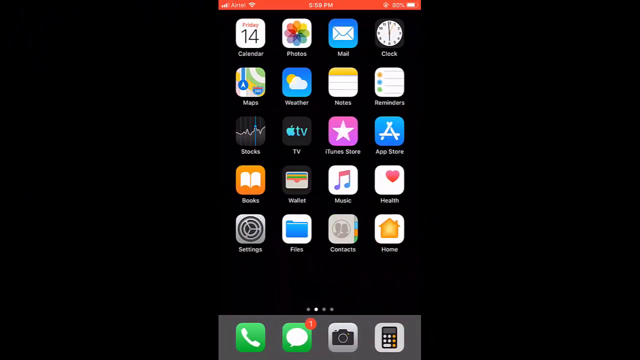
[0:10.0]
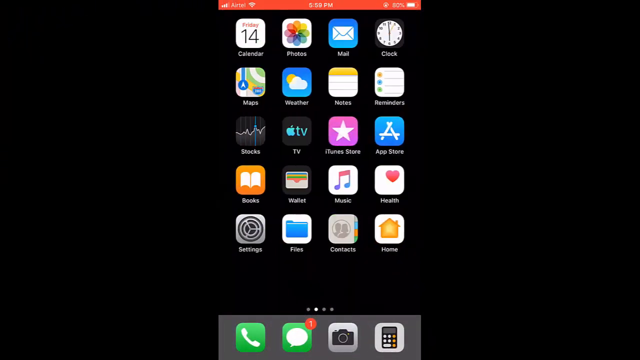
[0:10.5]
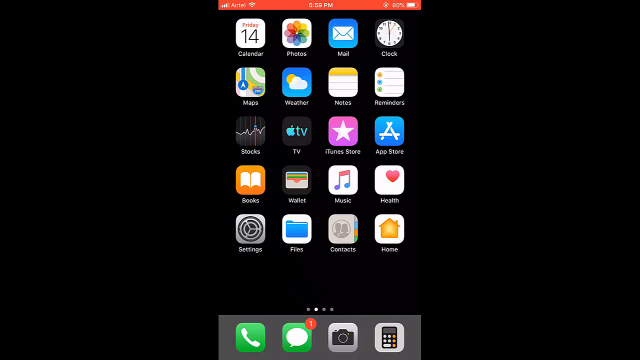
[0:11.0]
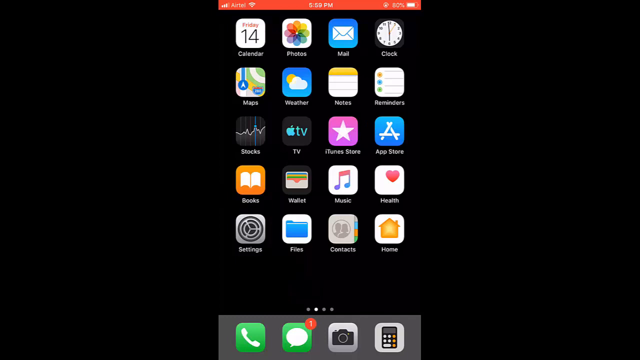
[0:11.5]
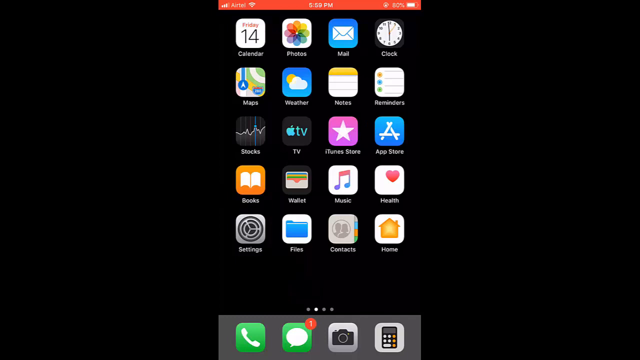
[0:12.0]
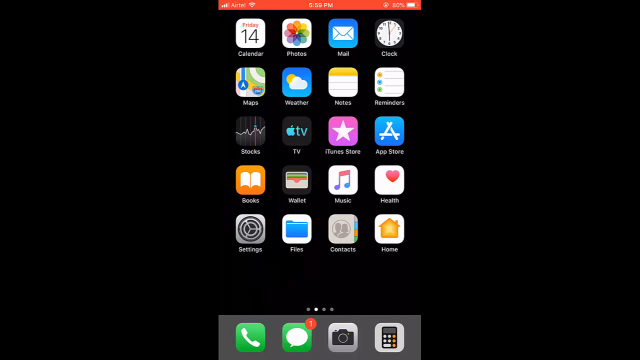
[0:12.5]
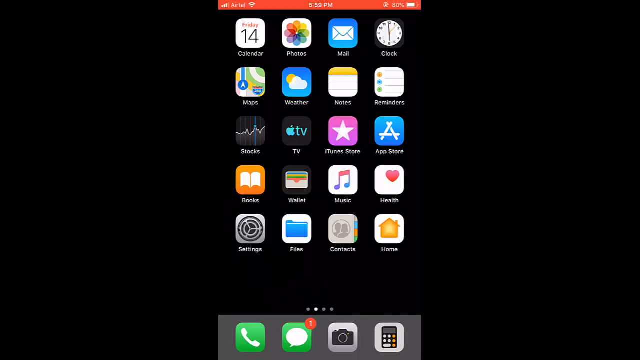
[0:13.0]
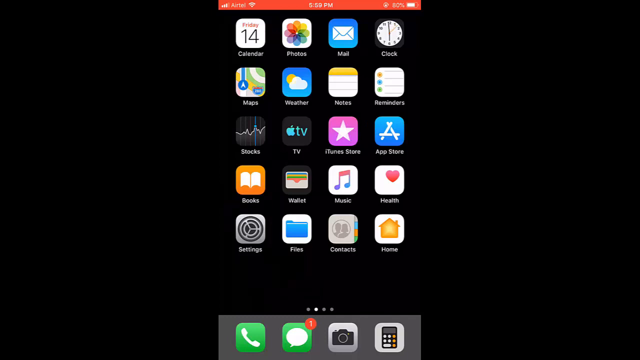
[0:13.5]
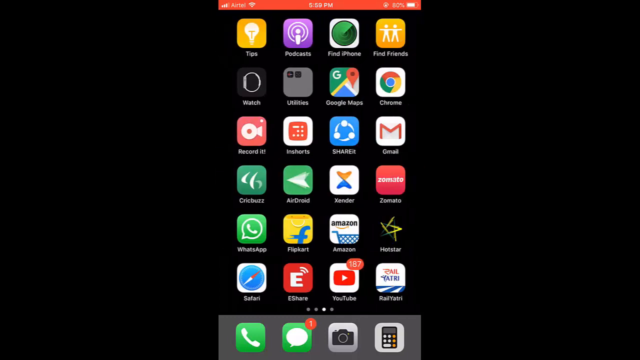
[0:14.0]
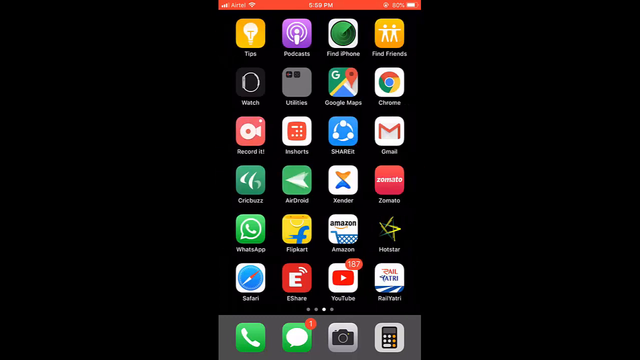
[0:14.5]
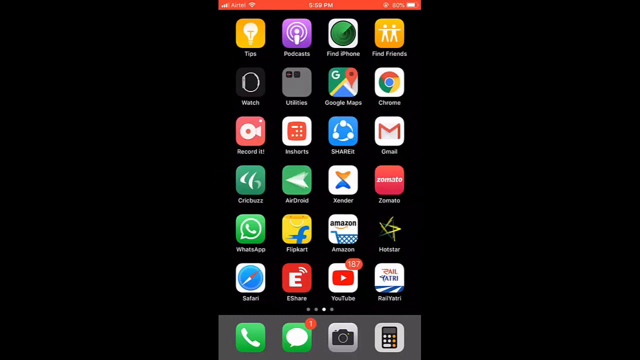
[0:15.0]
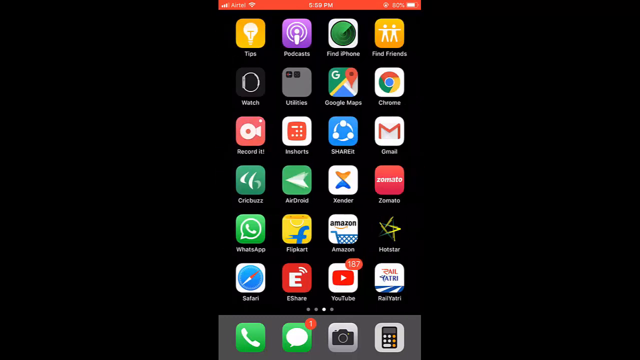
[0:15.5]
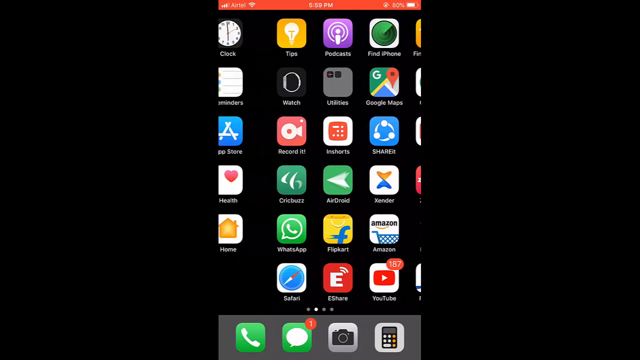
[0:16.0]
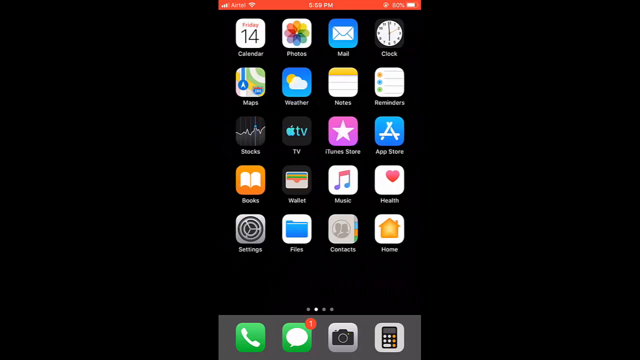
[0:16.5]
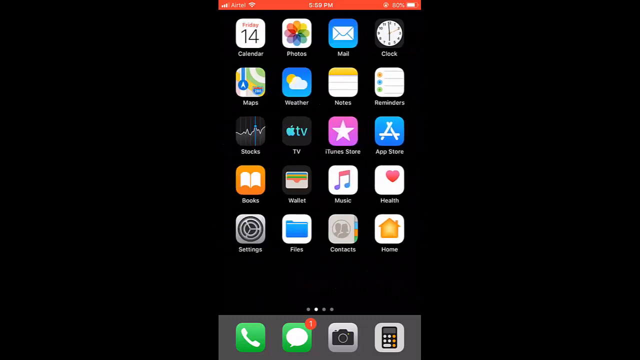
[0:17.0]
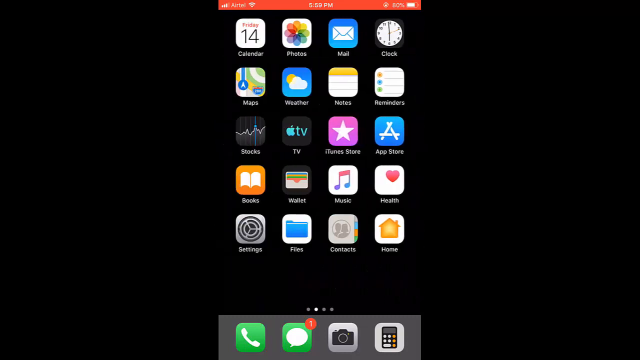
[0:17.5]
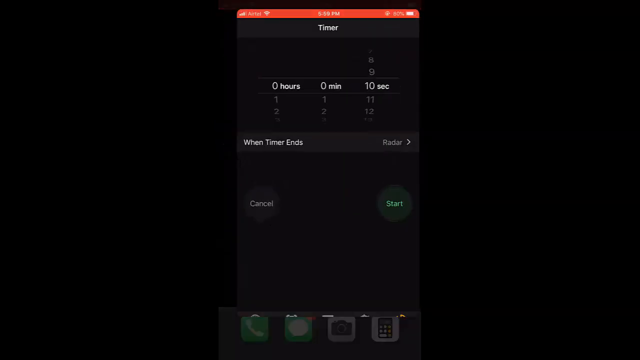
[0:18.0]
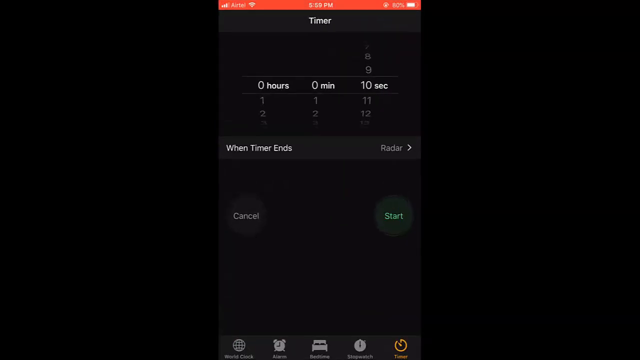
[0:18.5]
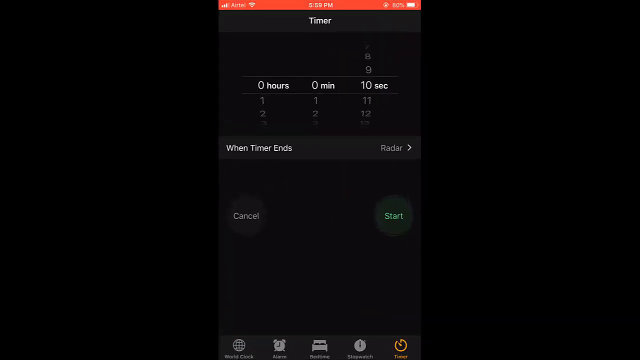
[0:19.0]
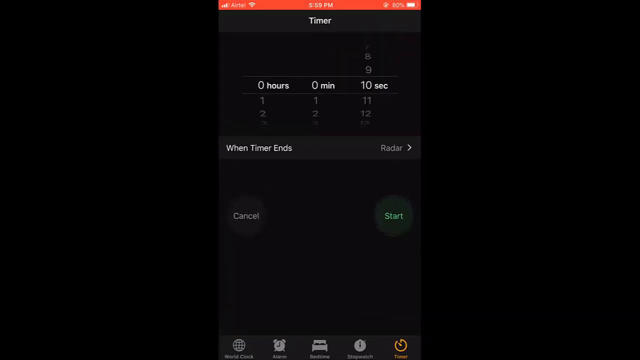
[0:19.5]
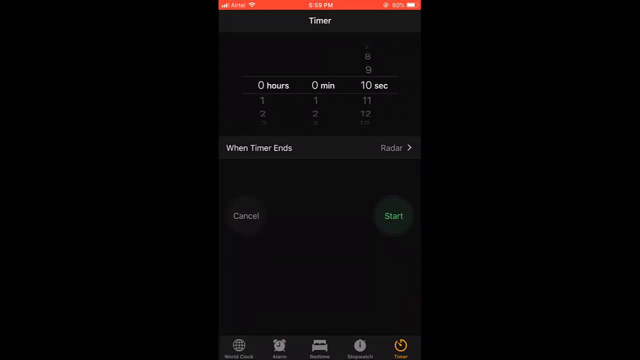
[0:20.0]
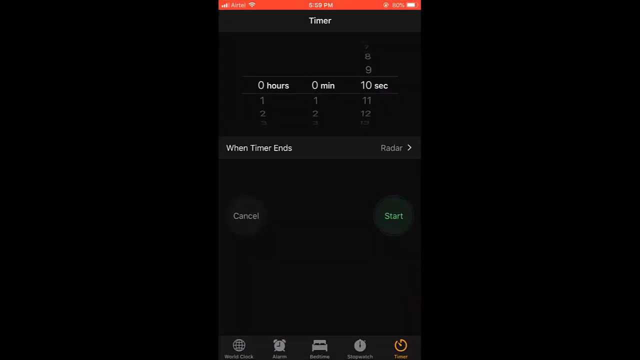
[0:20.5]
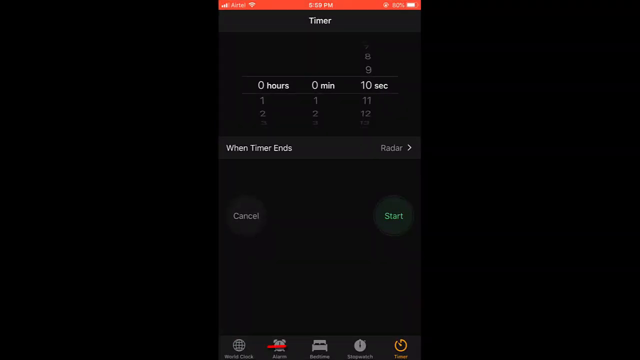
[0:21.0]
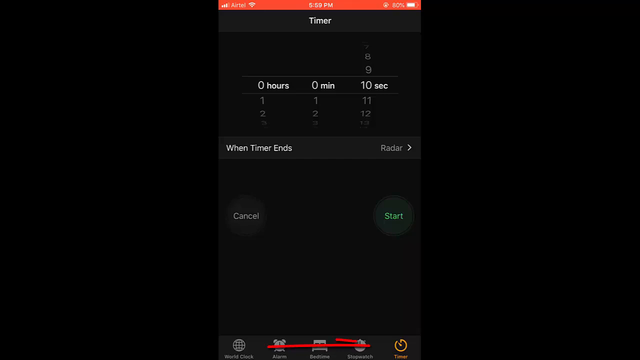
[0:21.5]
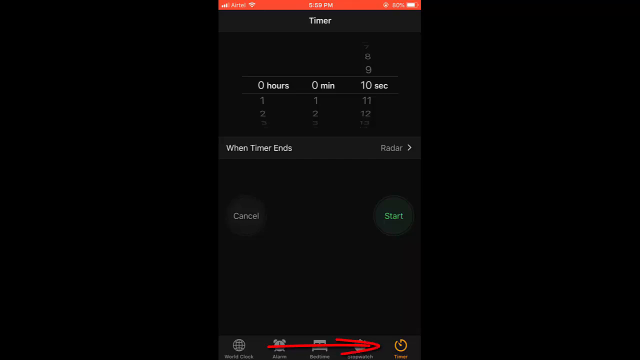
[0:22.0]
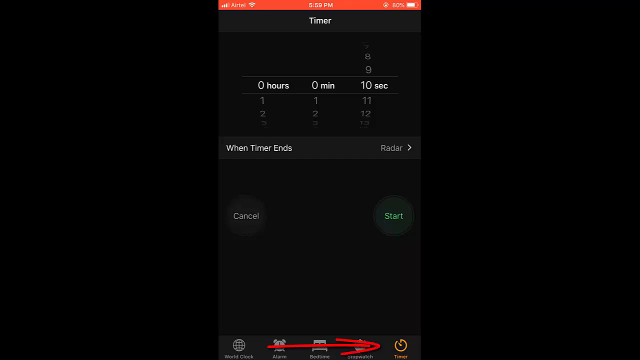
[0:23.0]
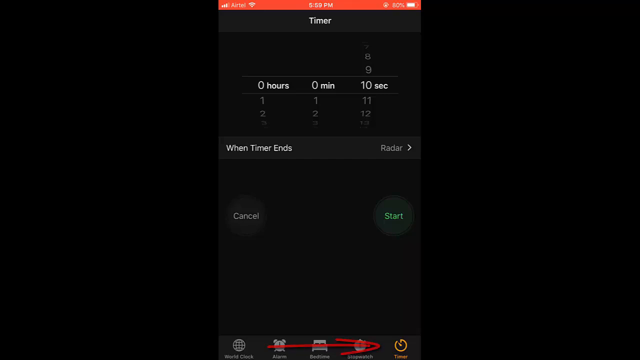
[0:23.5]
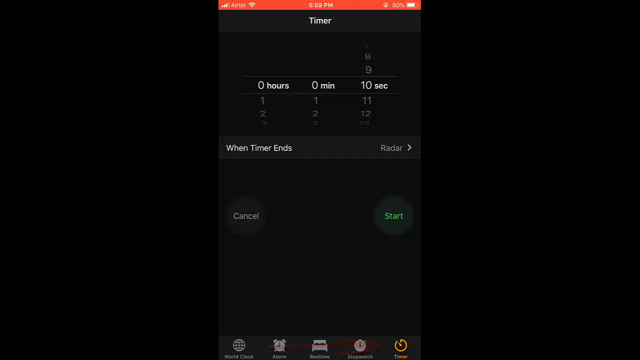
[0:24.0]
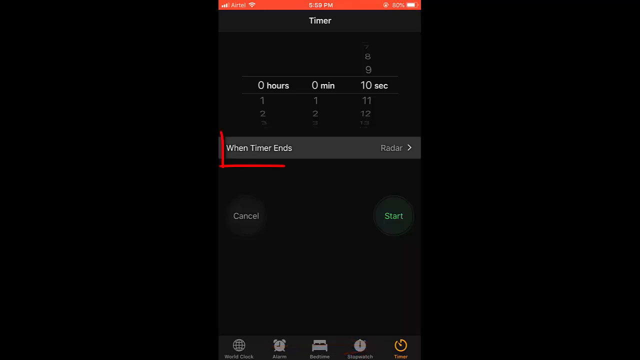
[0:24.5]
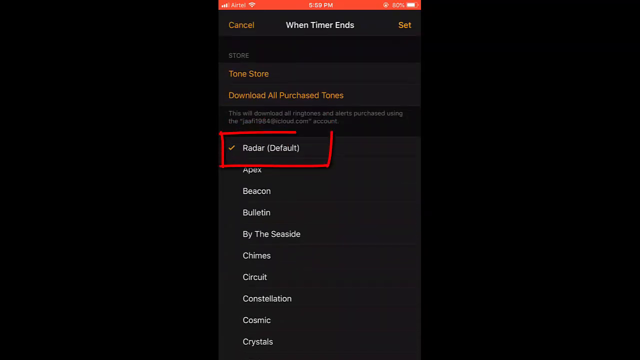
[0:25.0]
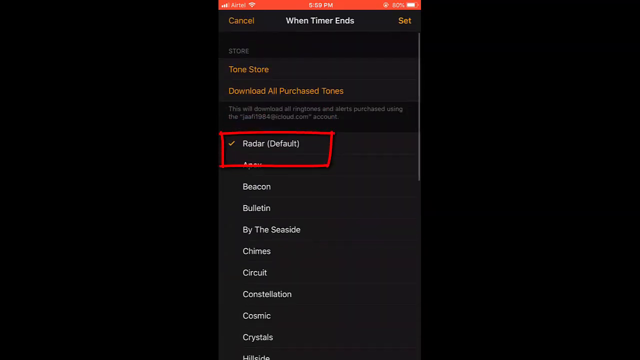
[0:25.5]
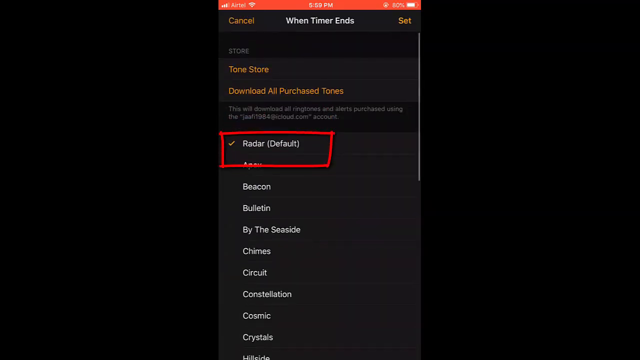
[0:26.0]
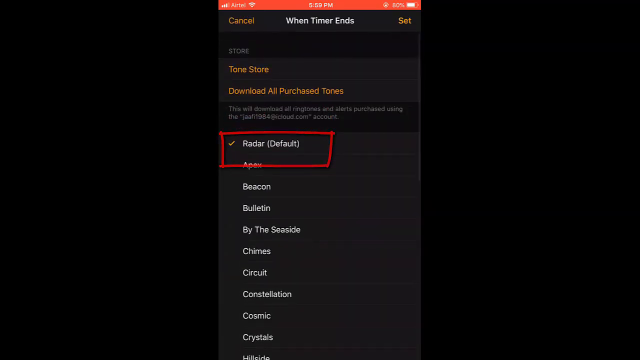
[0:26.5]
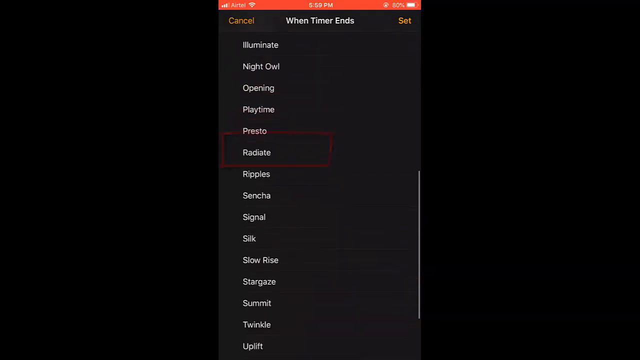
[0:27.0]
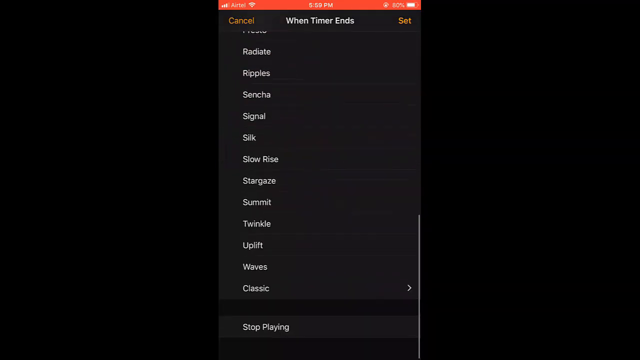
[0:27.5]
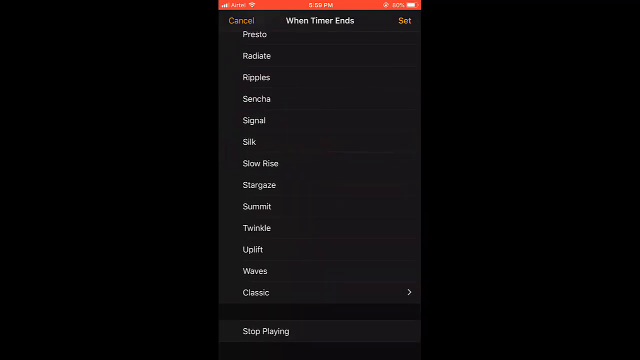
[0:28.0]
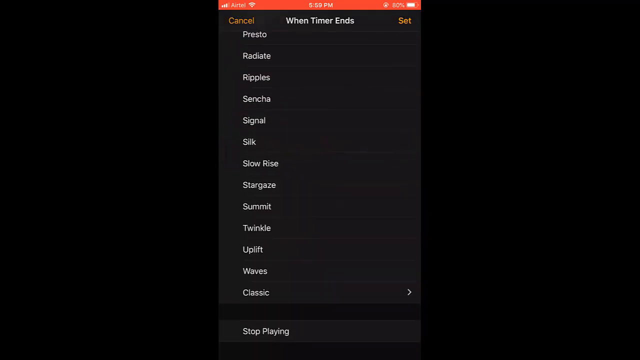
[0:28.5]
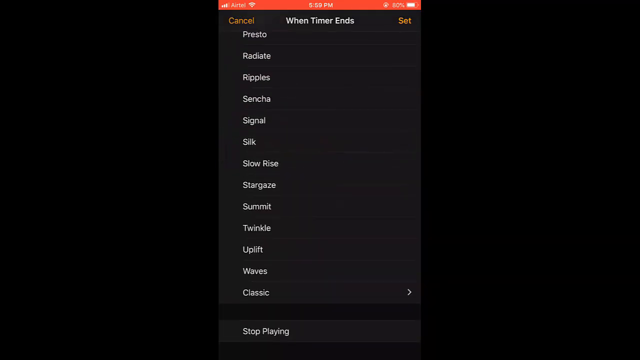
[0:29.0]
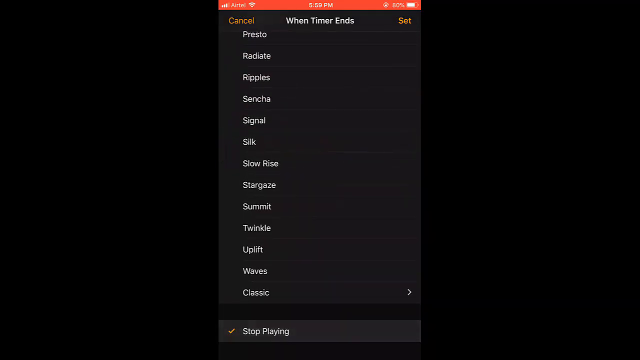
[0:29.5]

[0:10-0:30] A first-person view of a phone interface shows the user flipping through pages of many differently colored apps with various names and purposes. The user goes from the second page to the third page and back to the second, then clicks the clock app. A new section opens that says "Timer". The text "When Timer Ends" is highlighted by a red box drawn around it. A new screen opens, and the red box now surrounds the word "radar", which has an orange checkmark to its left and the word "default" in brackets to its right. The user scrolls through the various options on the screen until eventually reaching the very bottom.